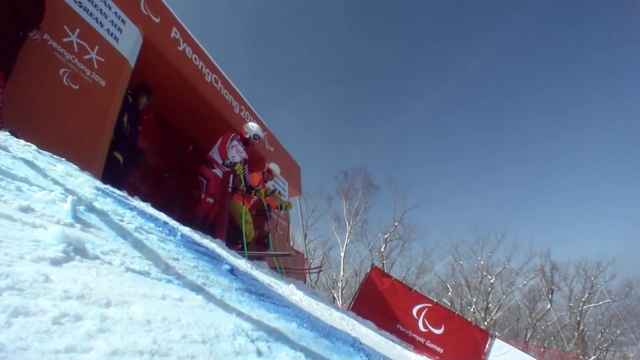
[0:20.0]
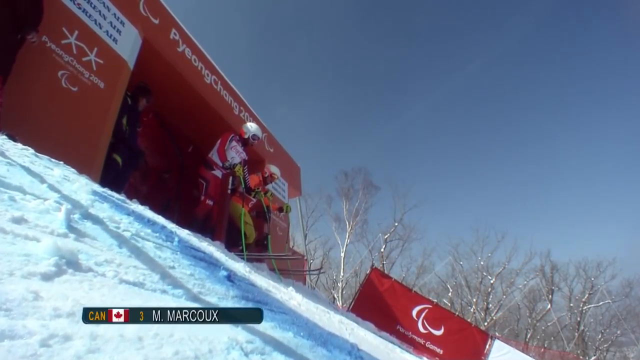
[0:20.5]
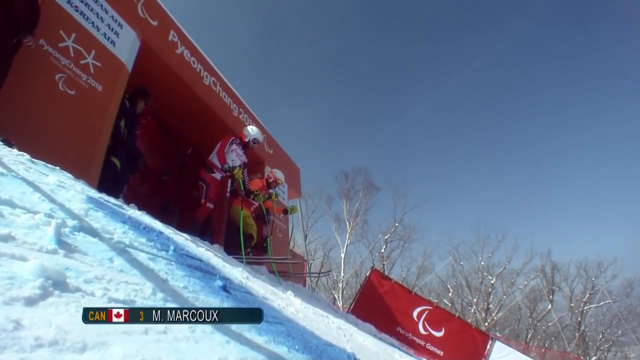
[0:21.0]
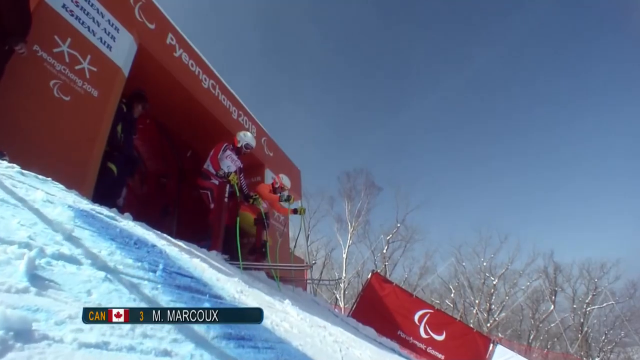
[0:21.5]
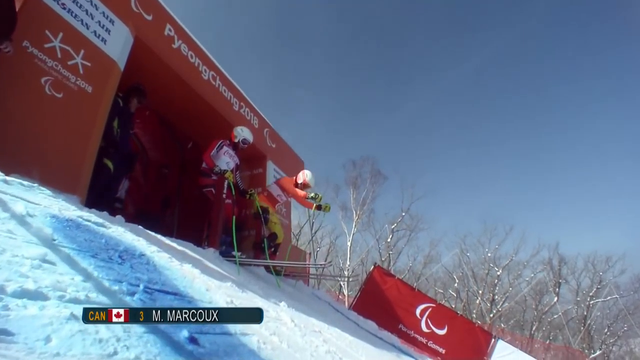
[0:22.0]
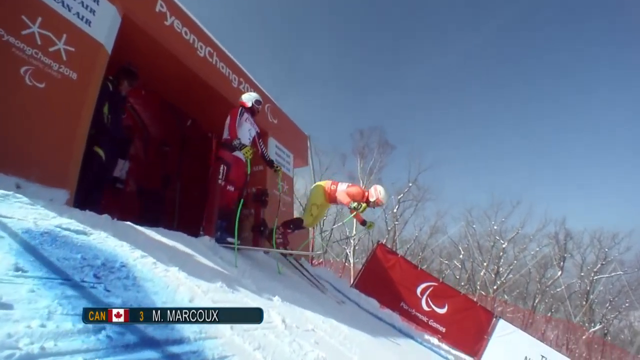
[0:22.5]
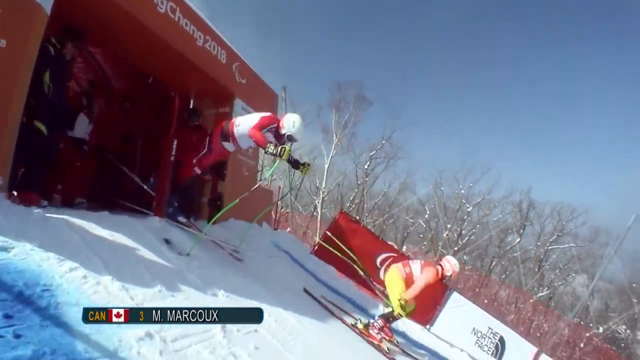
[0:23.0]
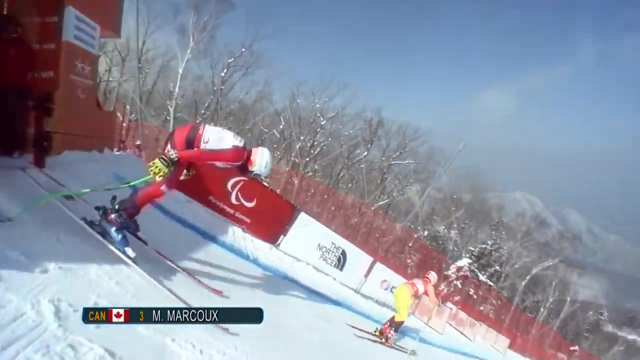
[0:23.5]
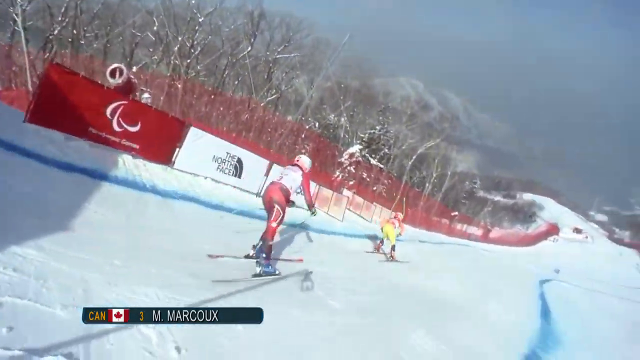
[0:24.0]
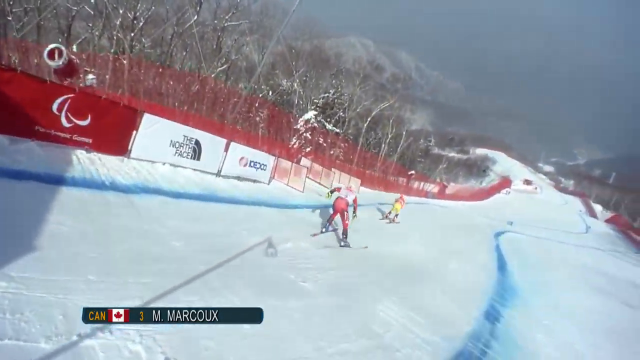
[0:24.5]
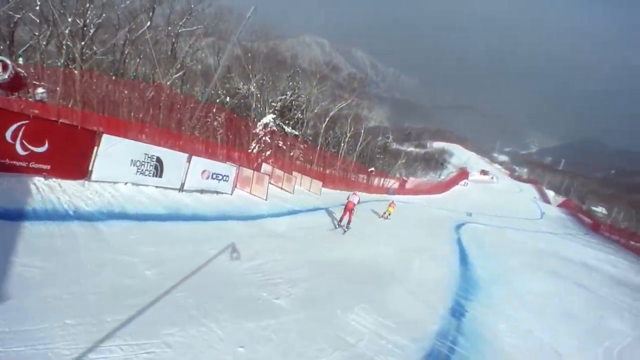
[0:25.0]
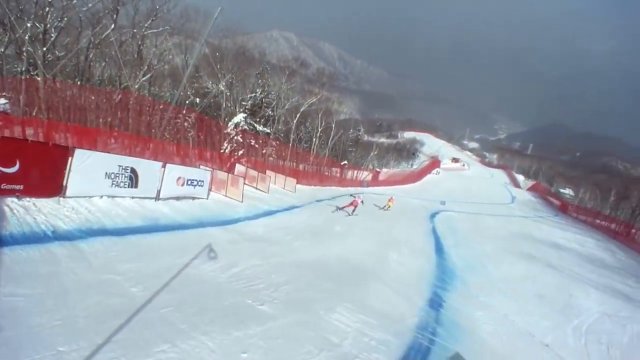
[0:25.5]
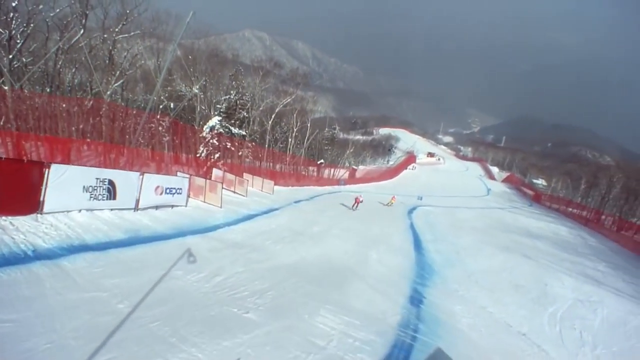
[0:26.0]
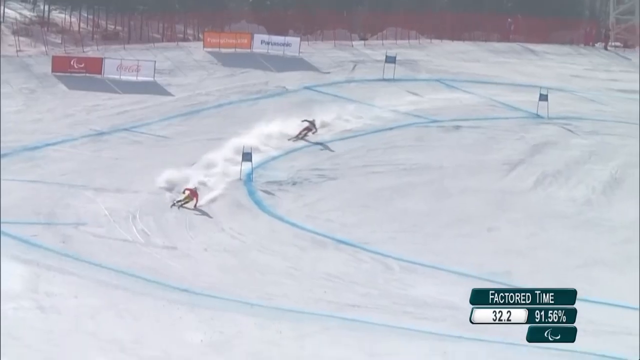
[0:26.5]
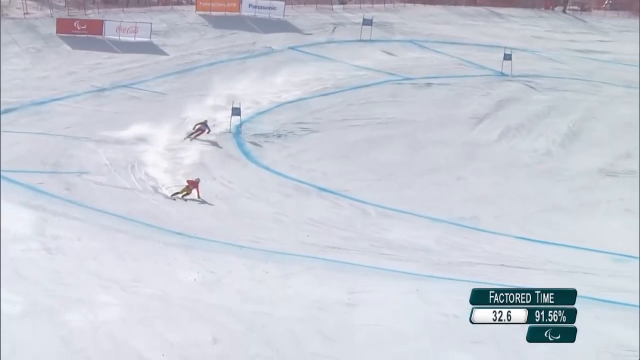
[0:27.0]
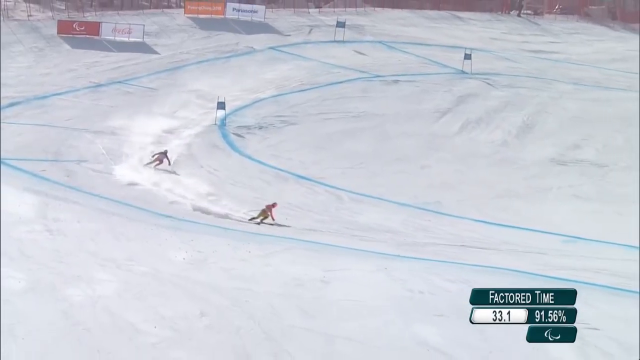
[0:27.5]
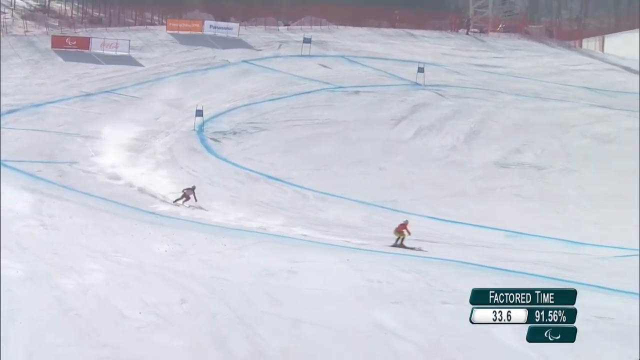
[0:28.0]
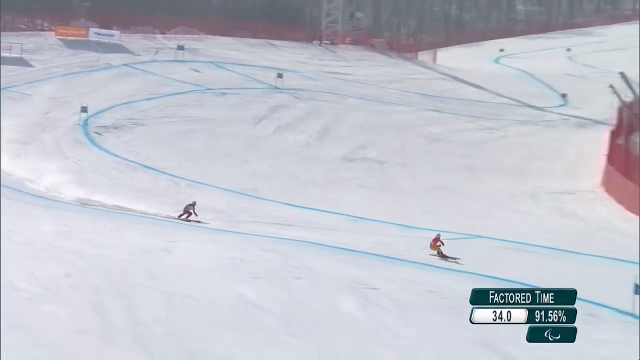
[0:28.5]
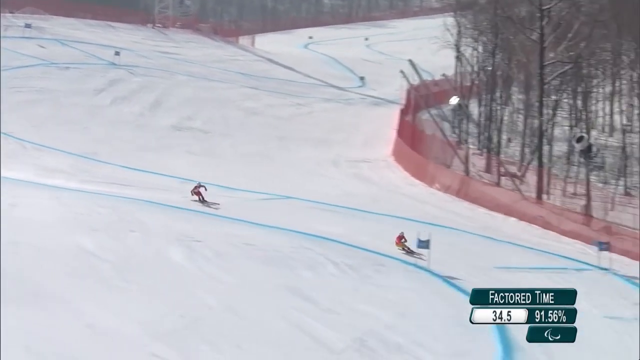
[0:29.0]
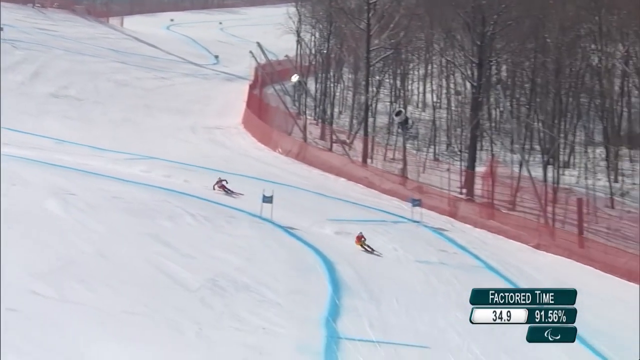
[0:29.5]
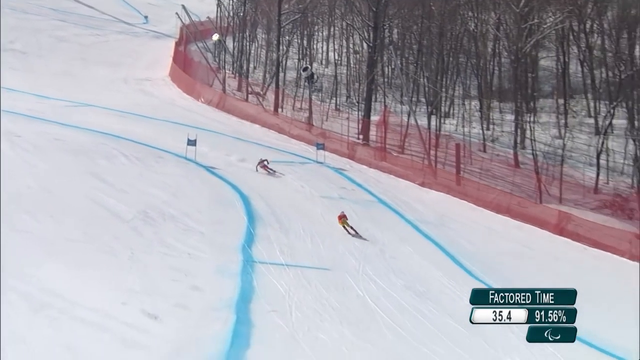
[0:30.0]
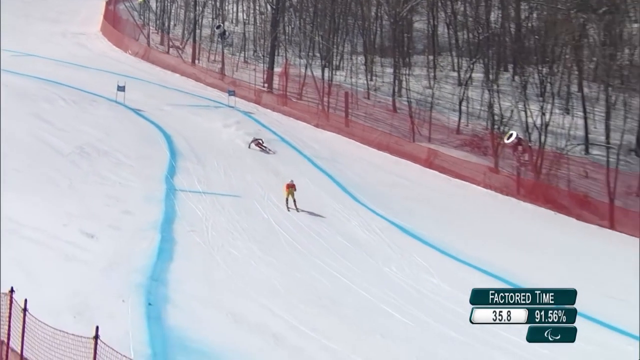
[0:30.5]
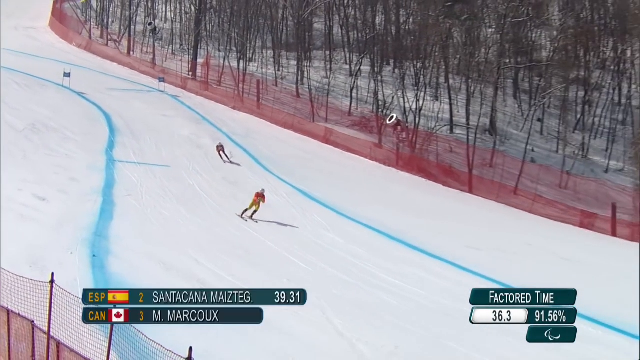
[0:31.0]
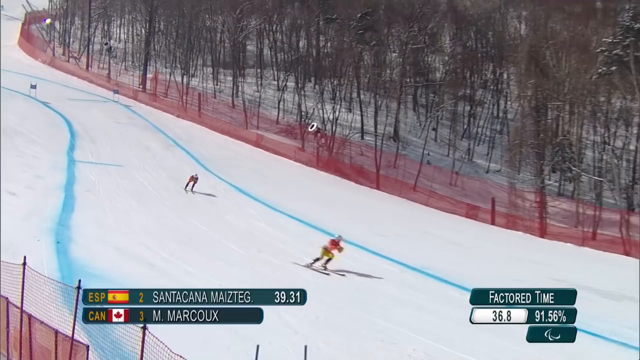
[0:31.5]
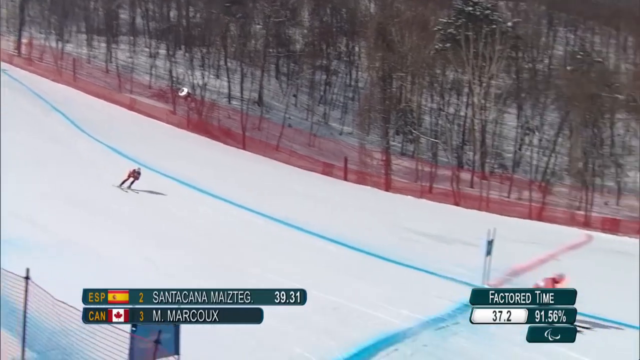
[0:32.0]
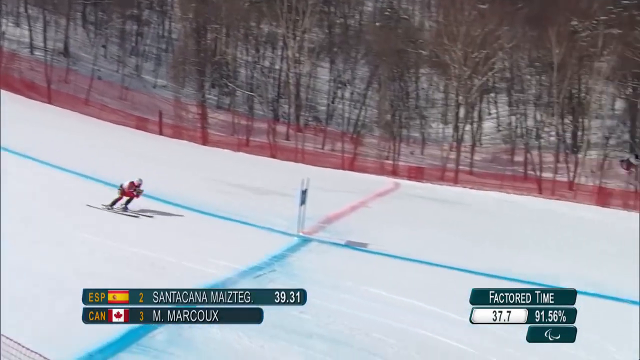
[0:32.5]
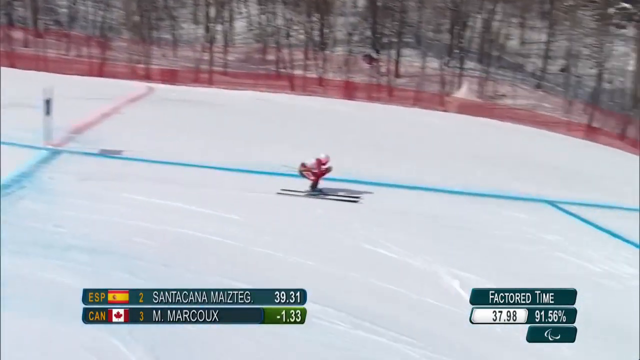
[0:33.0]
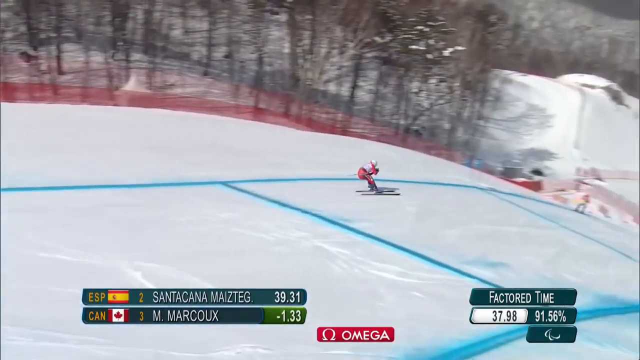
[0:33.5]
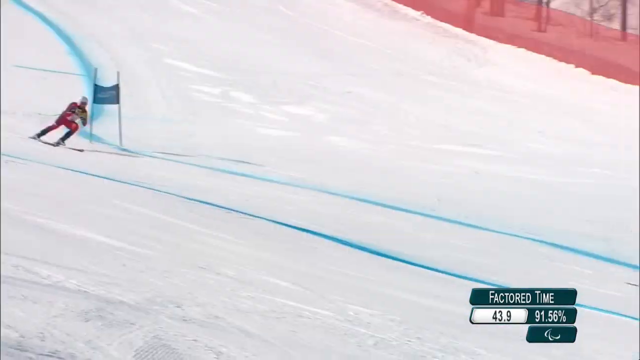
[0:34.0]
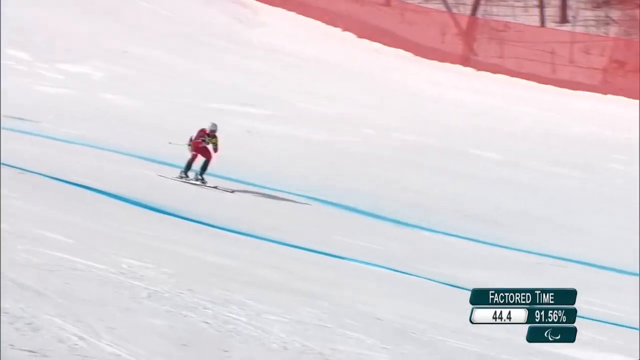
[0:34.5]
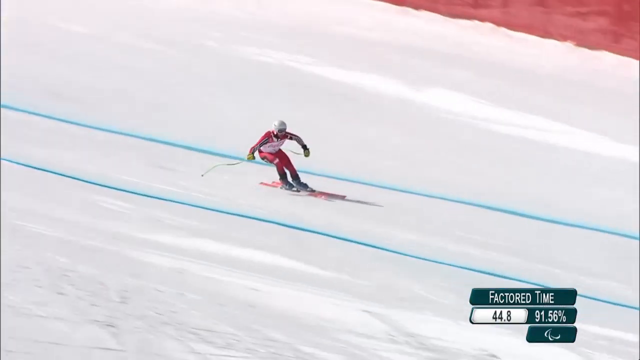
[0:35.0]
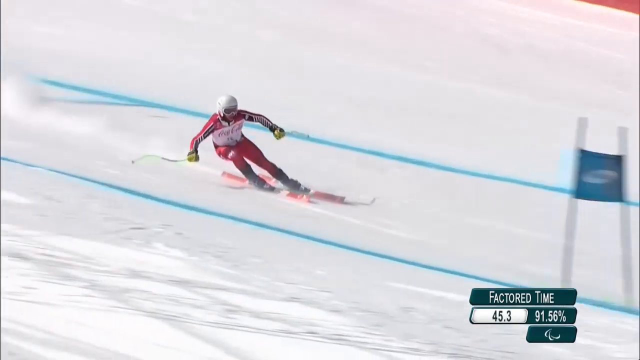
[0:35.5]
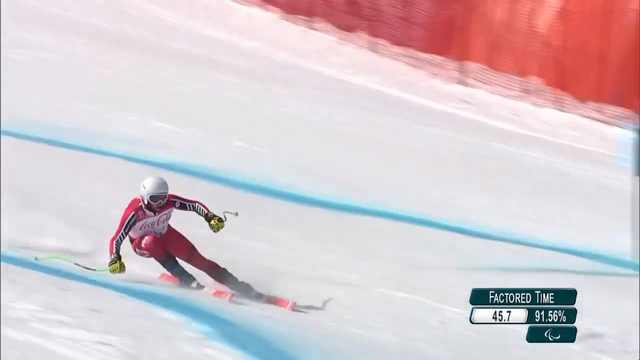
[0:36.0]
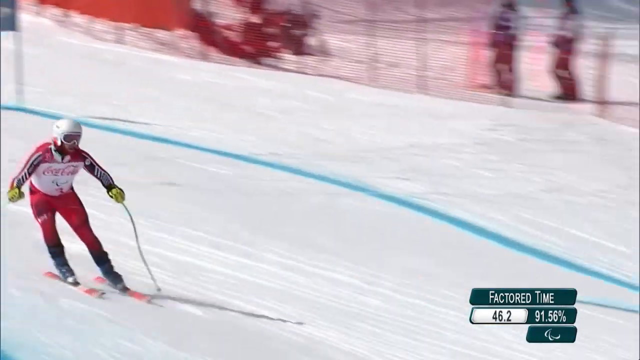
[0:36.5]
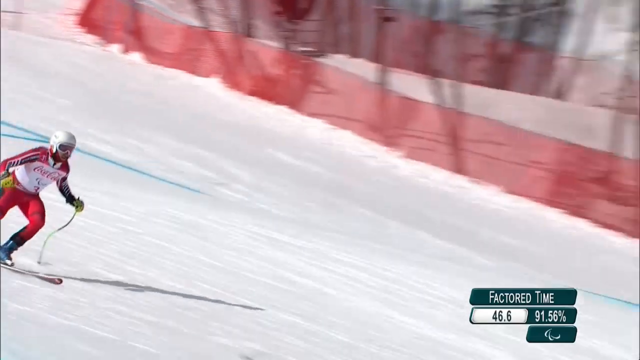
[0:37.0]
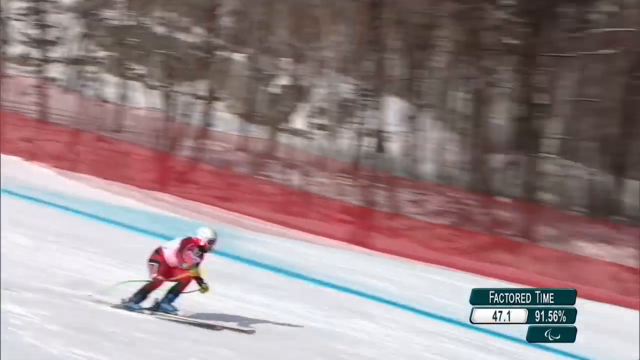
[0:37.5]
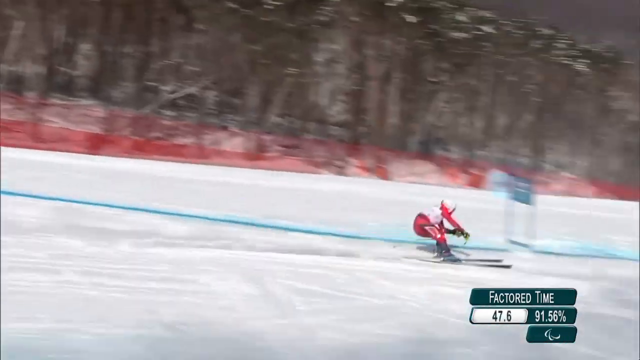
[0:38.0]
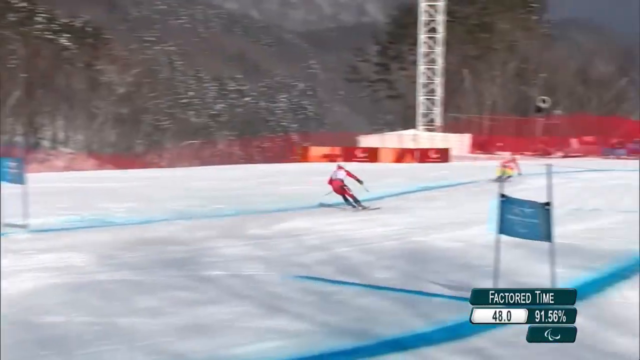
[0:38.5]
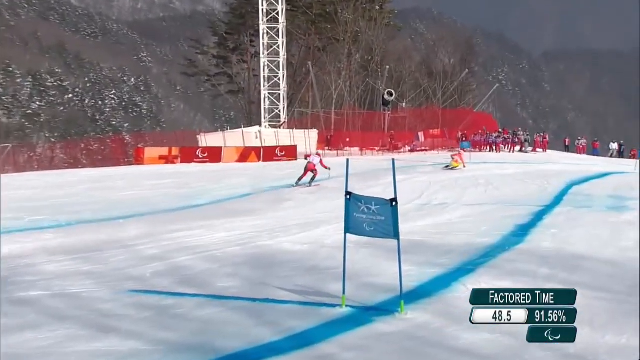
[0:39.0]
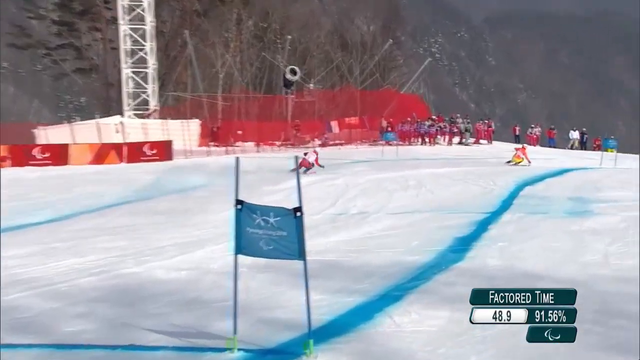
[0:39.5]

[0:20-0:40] The view opens at the top of a ski hill at a start line that says "PyeongChang 2018". A couple of skiers have their skis over the snow, and some snow is going down the slope. The sky is blue and clear with no clouds, and trees are in the background to the right in a wintry setting. The skiers start, each wearing different colors, possibly representing different countries. Text in the bottom left says "Canada" along with a name, "M Marcu". The first skier starts, then the second, in what looks like a ski race, a slalom kind of event. Both skiers go very fast down the hill holding poles, the fences blurring past, as they ski between blue slalom lines.